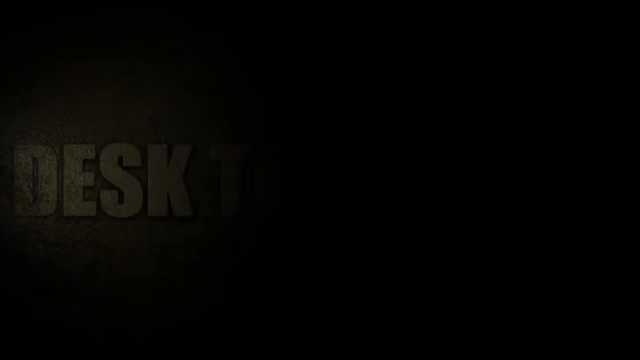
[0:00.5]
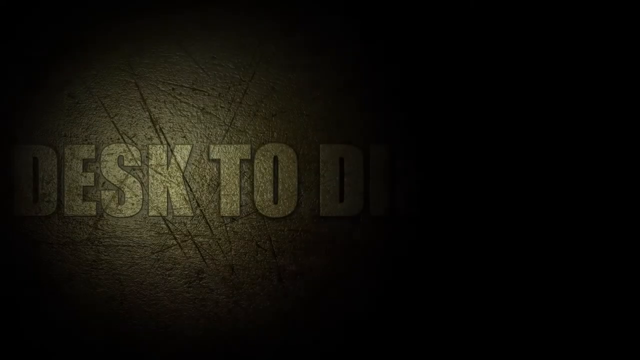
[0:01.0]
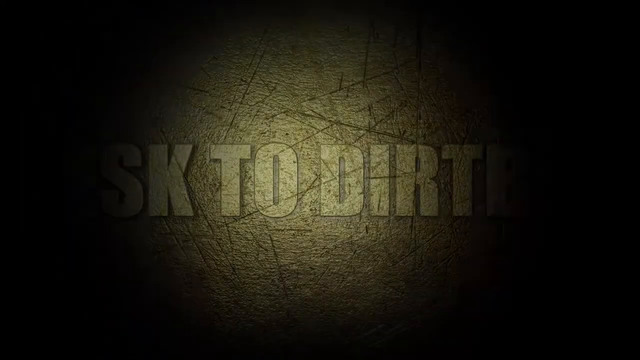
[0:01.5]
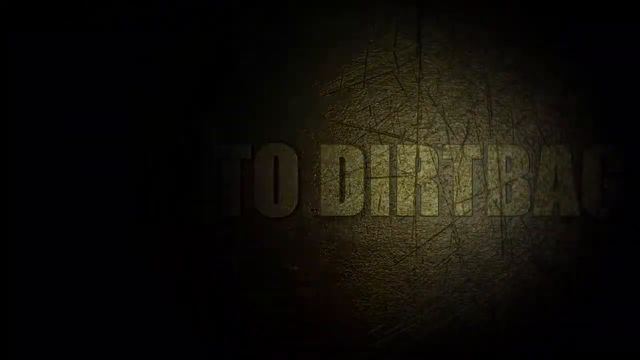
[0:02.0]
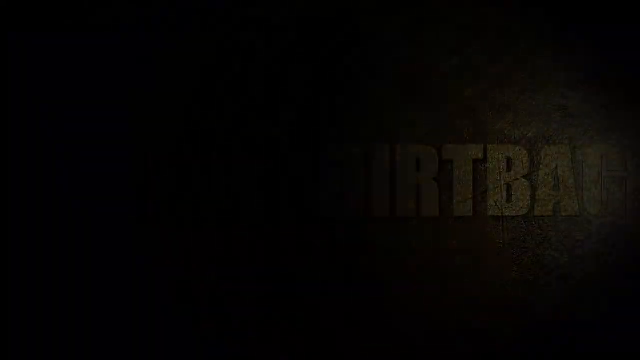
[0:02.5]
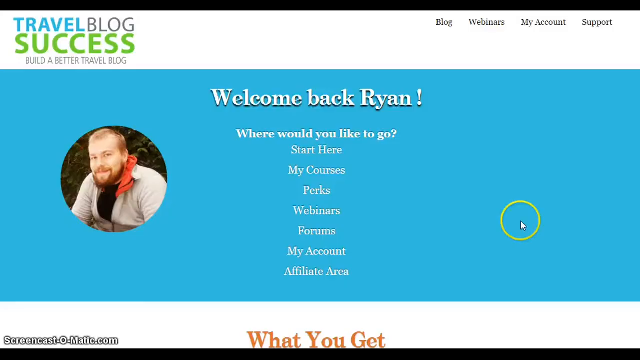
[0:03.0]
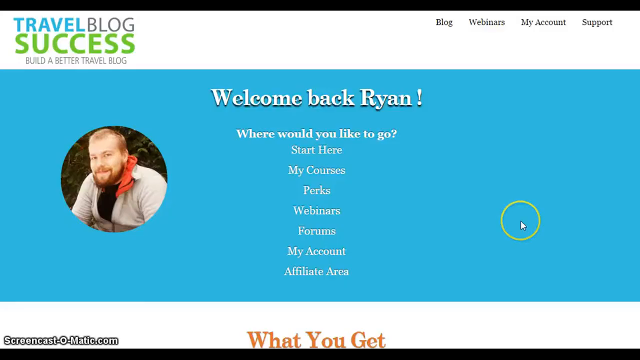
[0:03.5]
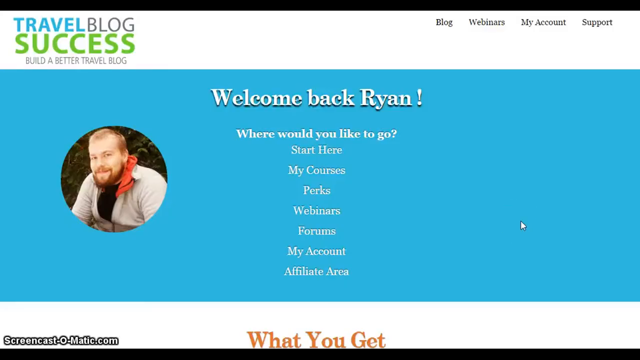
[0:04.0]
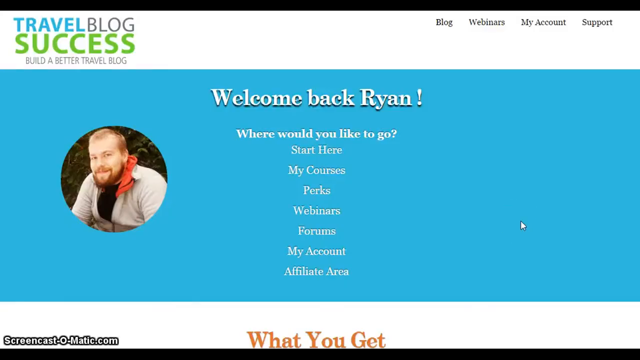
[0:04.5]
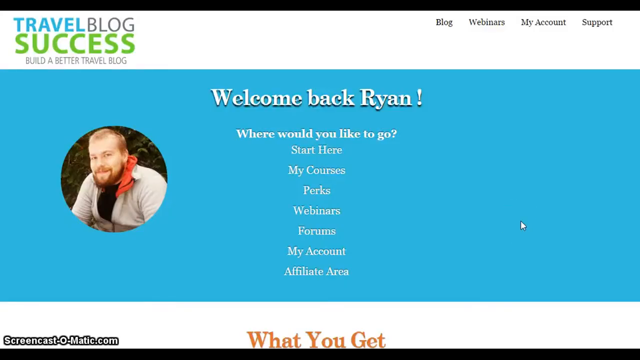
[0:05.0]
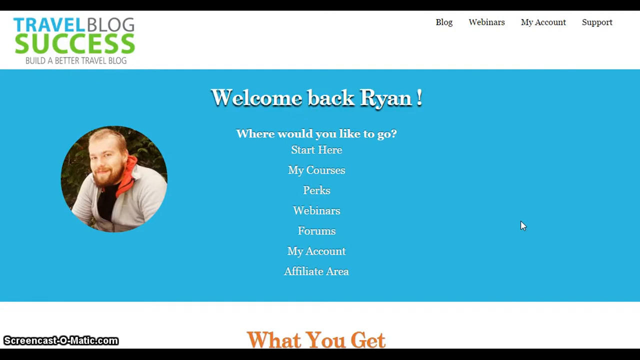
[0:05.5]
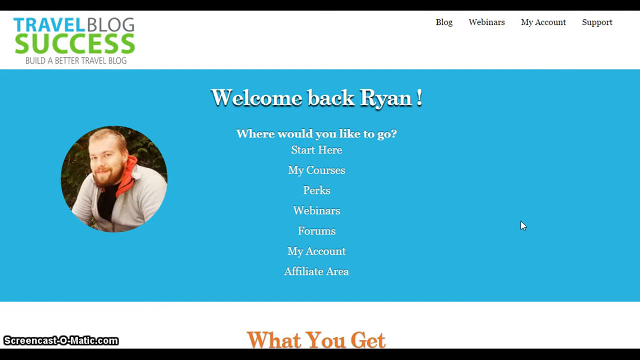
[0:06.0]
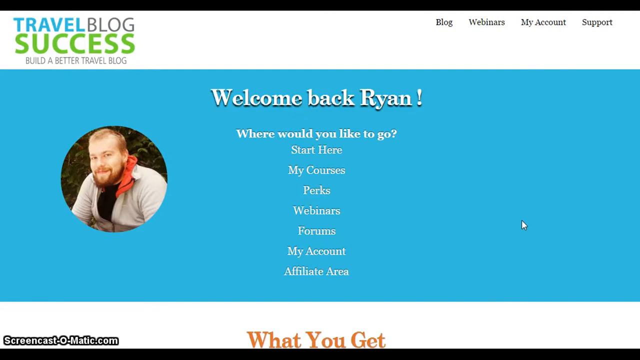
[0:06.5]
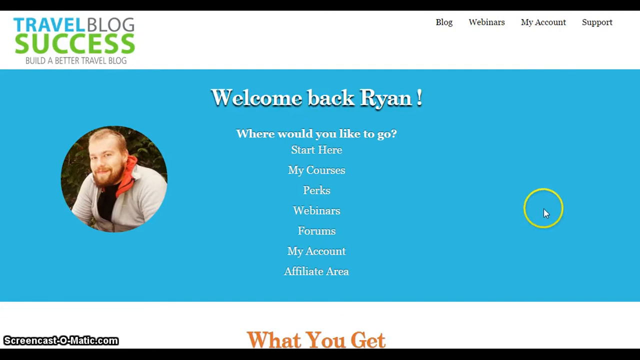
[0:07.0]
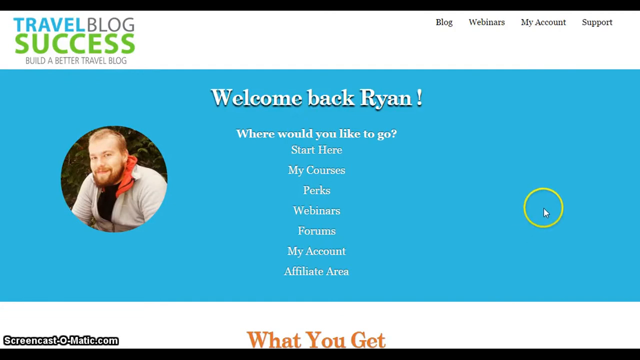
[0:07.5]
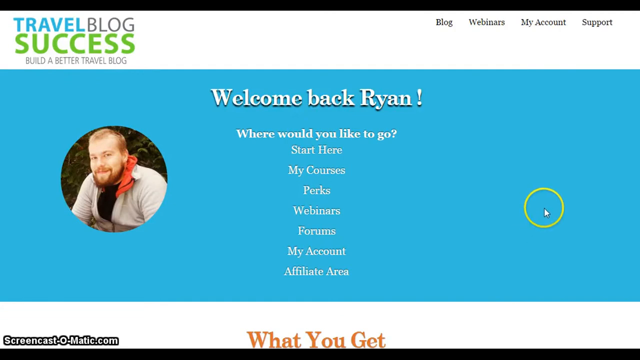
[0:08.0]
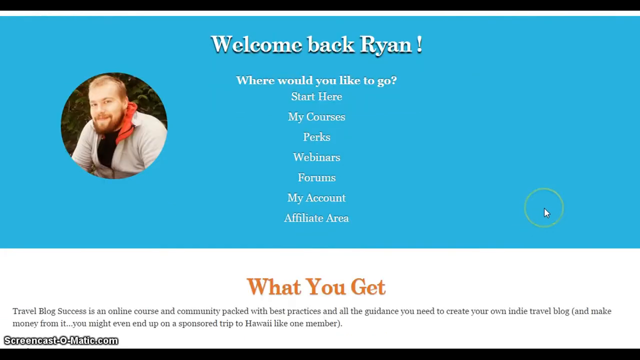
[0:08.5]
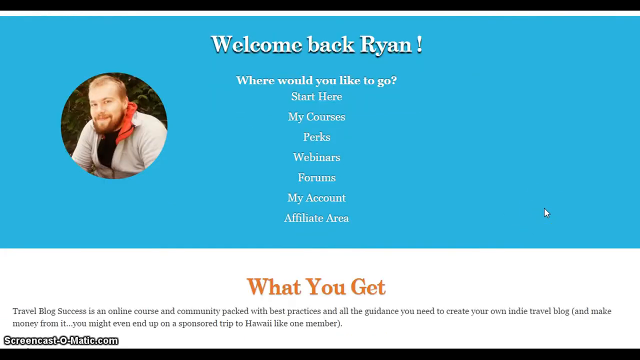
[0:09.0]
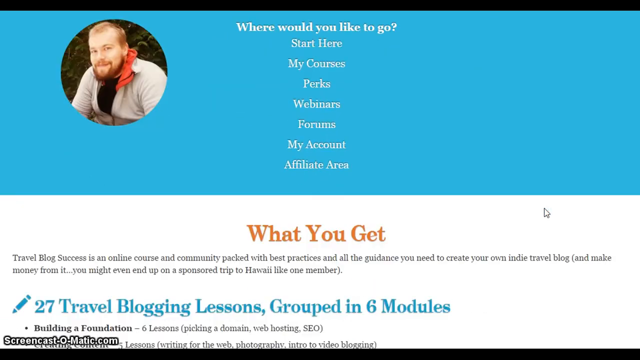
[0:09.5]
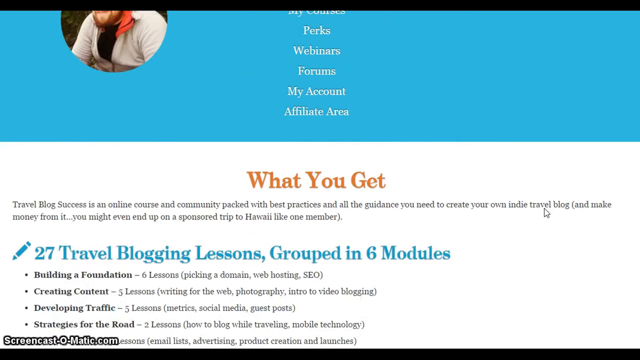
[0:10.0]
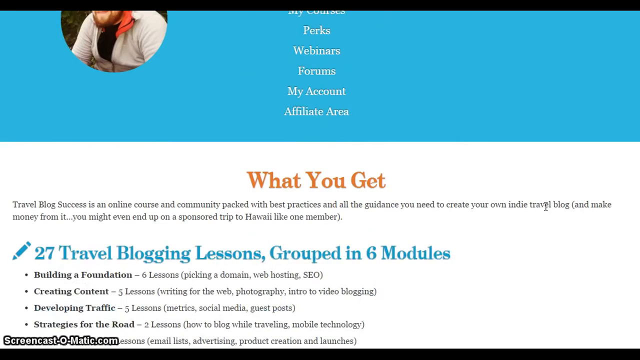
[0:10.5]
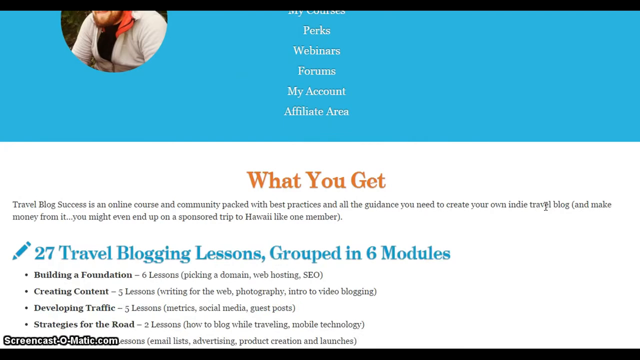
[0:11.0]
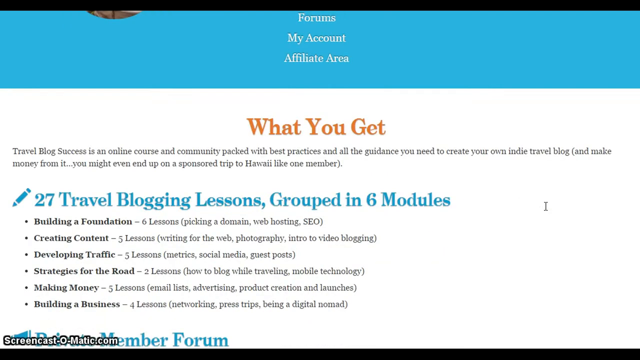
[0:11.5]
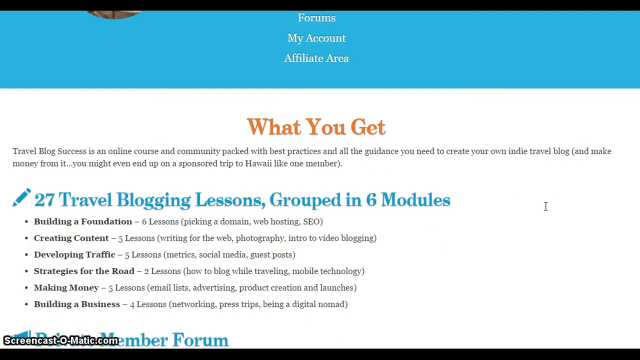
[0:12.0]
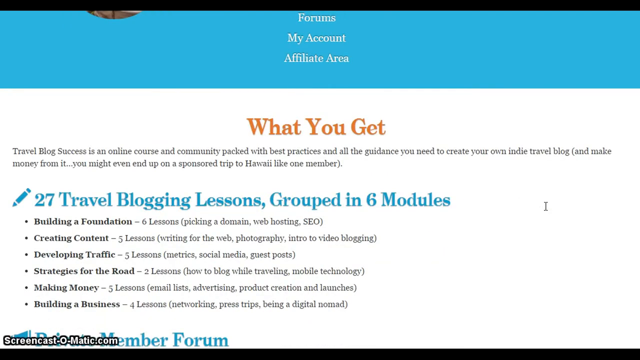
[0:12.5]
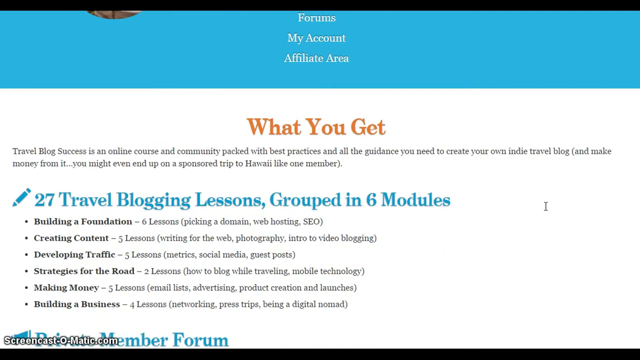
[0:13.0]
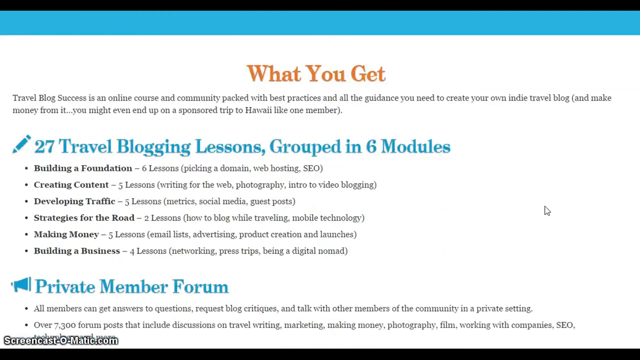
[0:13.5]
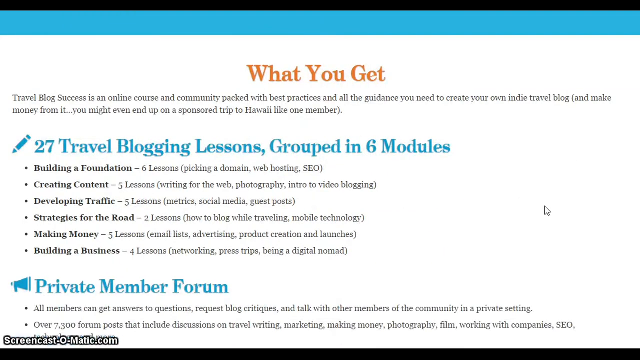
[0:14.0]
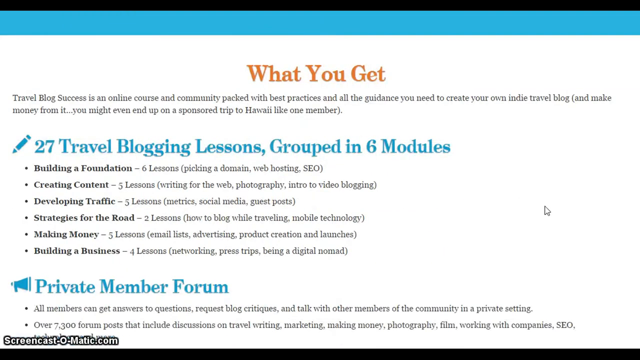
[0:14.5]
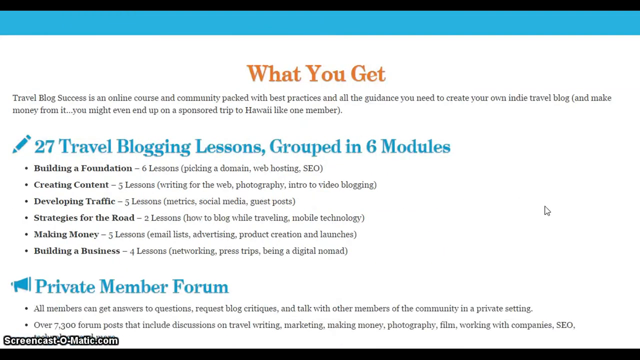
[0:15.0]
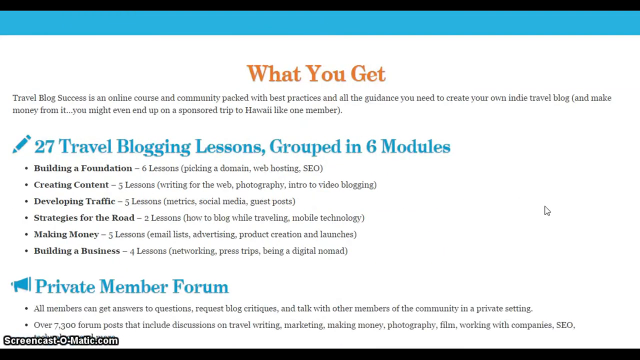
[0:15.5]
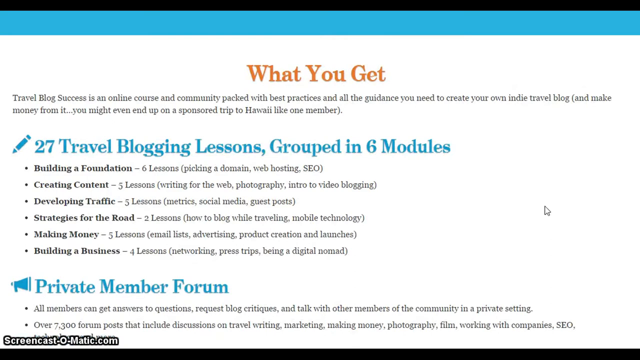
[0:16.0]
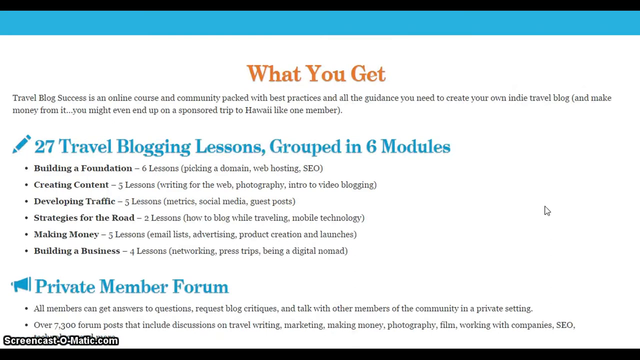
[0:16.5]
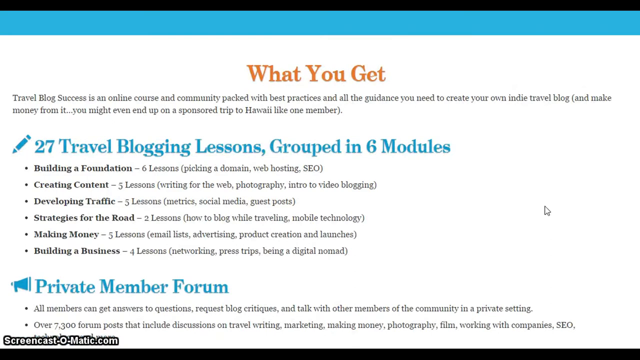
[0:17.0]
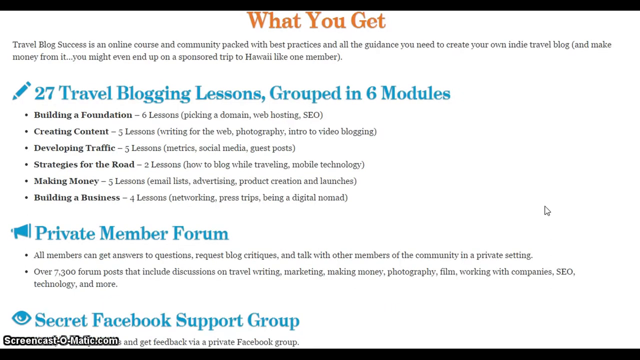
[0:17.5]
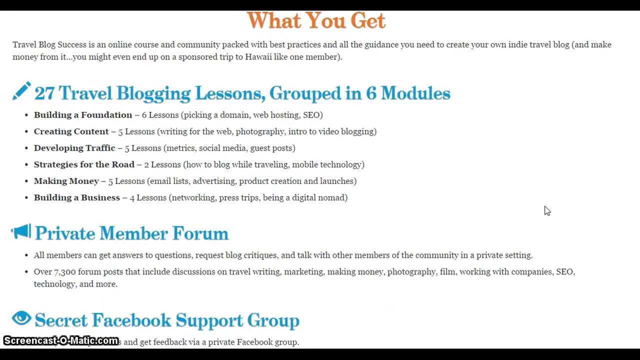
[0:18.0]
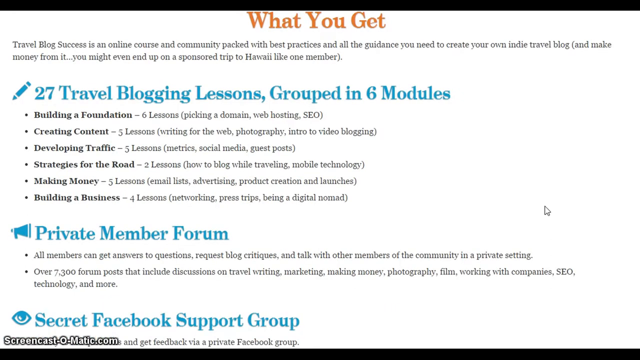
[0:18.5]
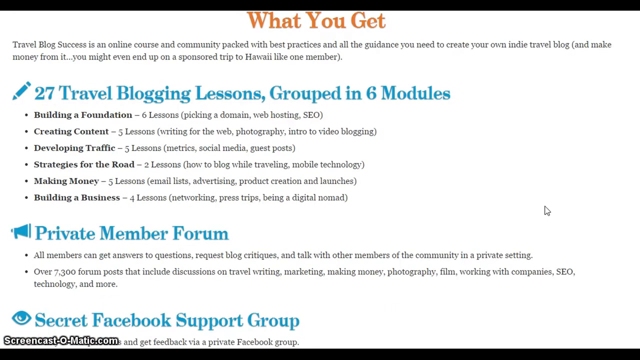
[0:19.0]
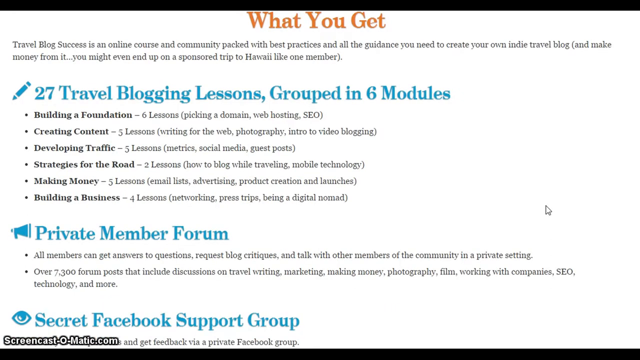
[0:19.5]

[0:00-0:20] The video opens on a blue picture with the text "welcome back Ryan". In the left-hand corner, inside a little circle, is a man with red hair and a beard, wearing a navy shirt, a beige sweater and a red scarf. There is what appears to be a table of contents listing items such as "perks", "courses", "my webinar" and "my account", and at its start it reads "27 travel blog lessons grouped in six modules". The view then moves on to the table of contents, which breaks down what is included; it is on a light blue background and scrolls down.